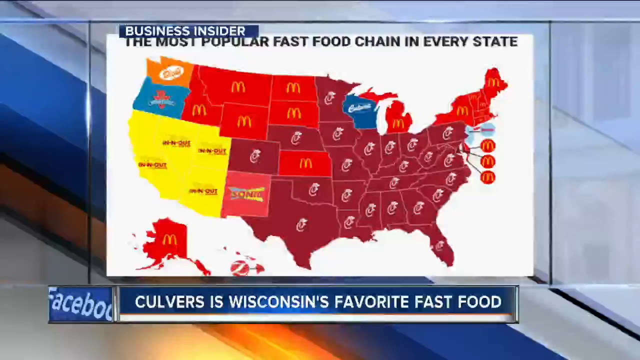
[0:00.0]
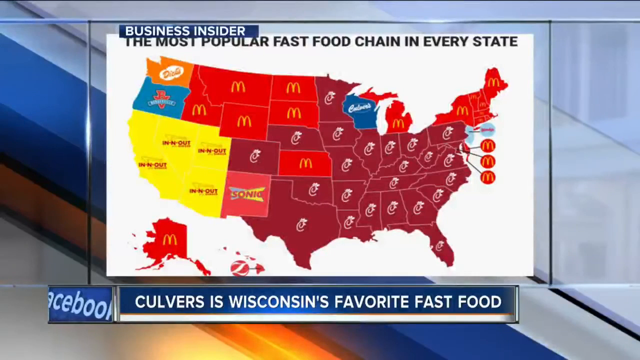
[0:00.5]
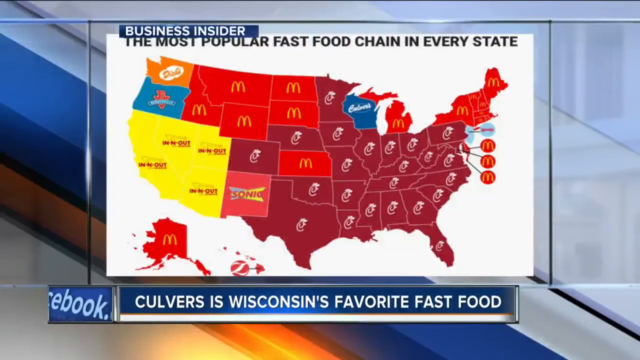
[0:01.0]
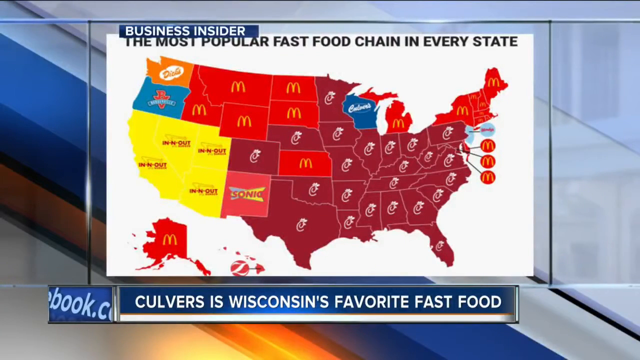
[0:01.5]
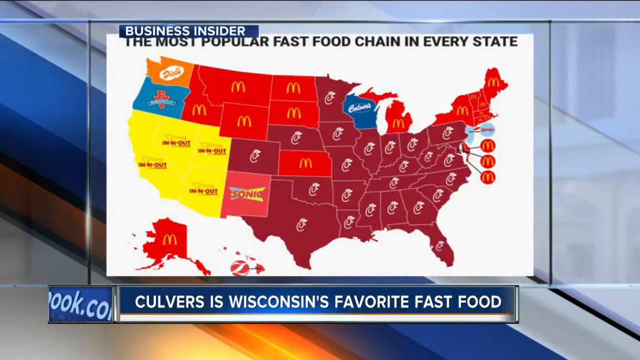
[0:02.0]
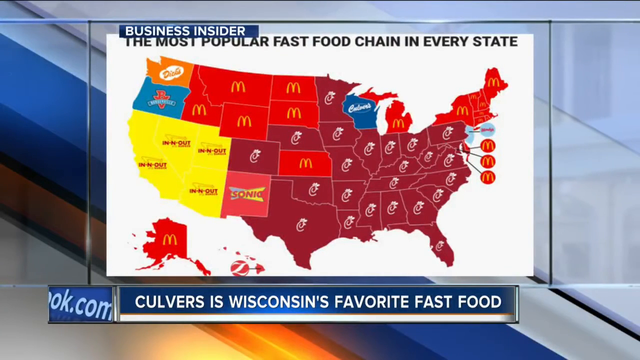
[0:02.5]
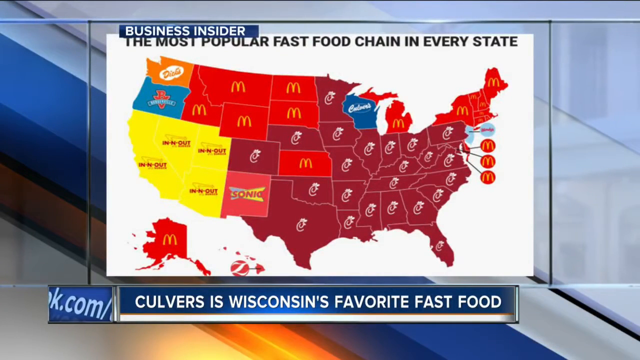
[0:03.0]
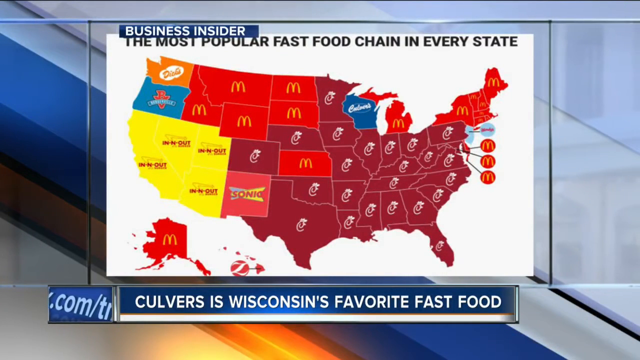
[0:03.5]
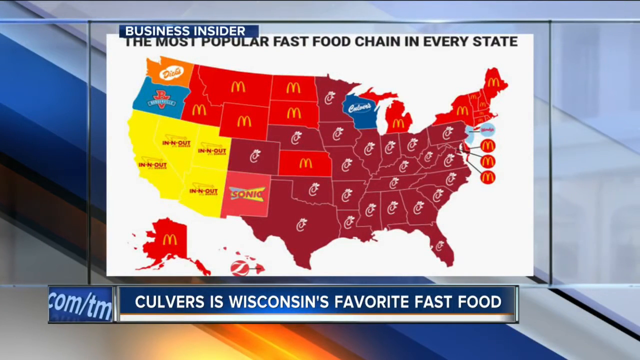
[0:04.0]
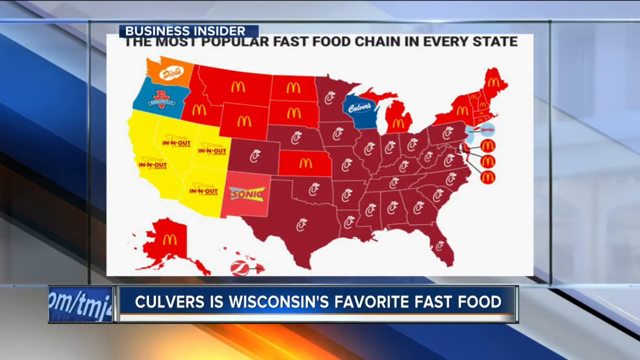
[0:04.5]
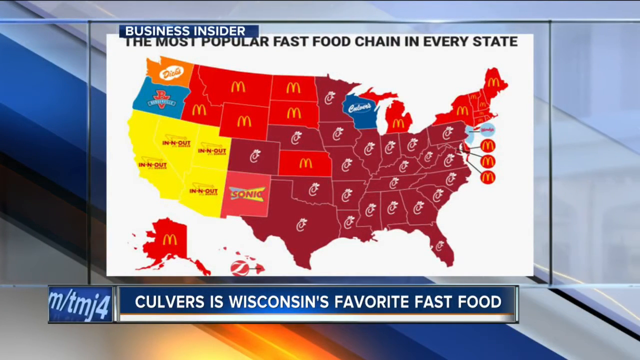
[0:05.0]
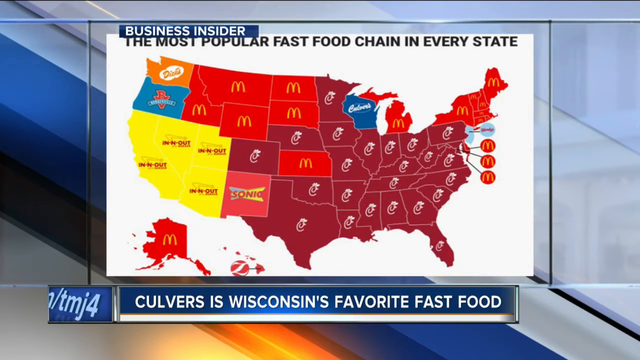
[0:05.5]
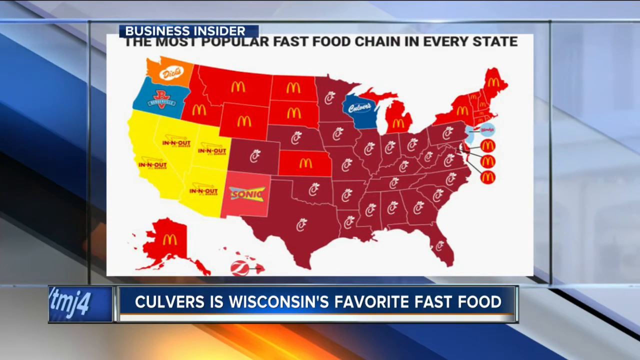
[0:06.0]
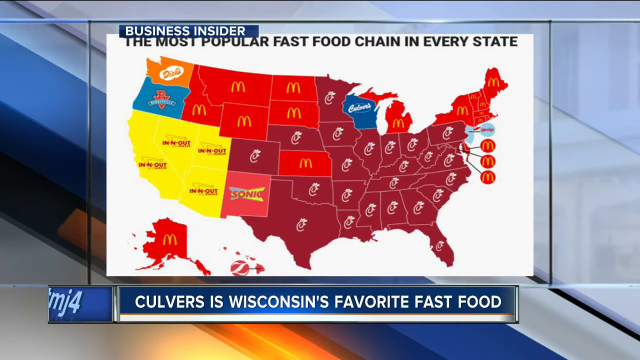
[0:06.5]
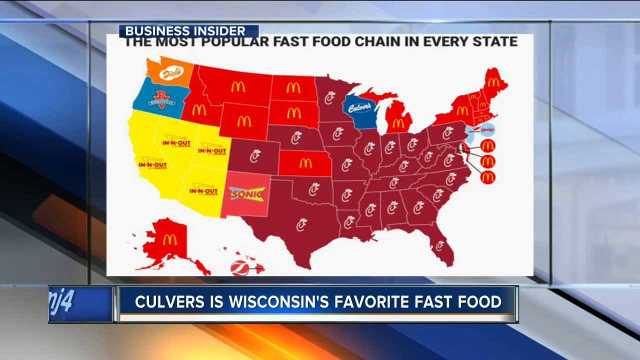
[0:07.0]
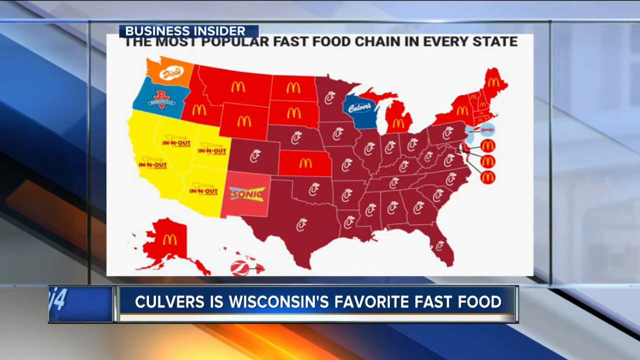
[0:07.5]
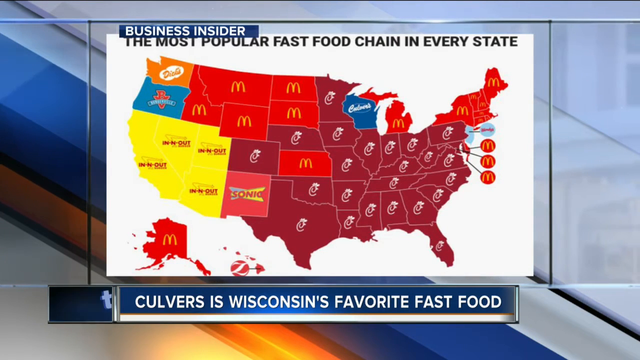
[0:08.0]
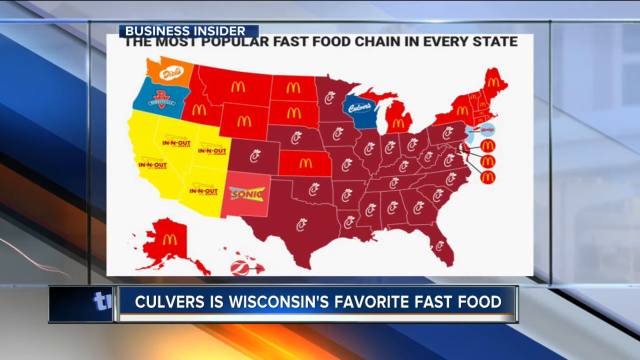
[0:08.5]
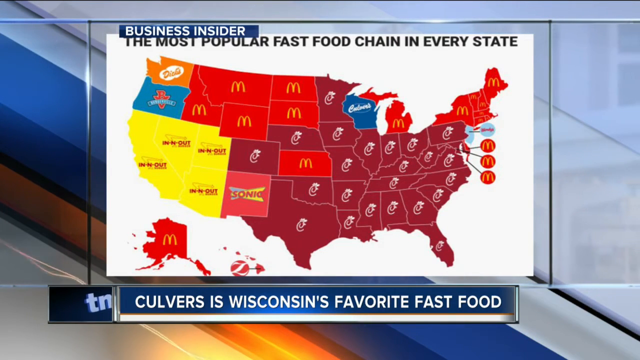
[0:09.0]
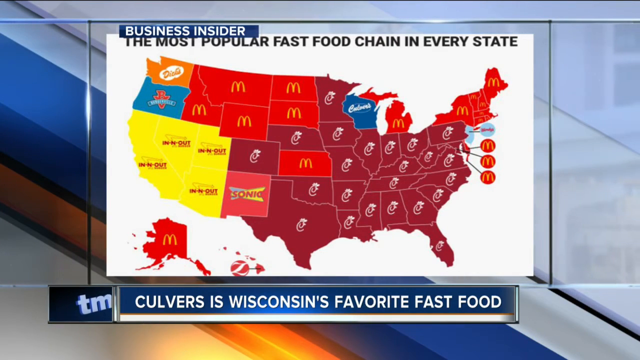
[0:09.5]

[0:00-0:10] A map of the United States appears with lines in gradient shades of blue behind it. Text reads "Business Insider, the most popular fast food chain in every state." Most of the states through the Midwest, East Coast and South are a maroon color with the Chick-fil-A logo. The northeastern states and Michigan are all McDonald's. Wisconsin is blue and reads "Culver's." The northwestern states of Montana, Idaho, North and South Dakota, and Wyoming are red with the McDonald's logo. The southwestern states, California, Nevada and that area, are yellow with In-N-Out. Text at the bottom of the screen reads "Culver's is Wisconsin's favorite fast food."